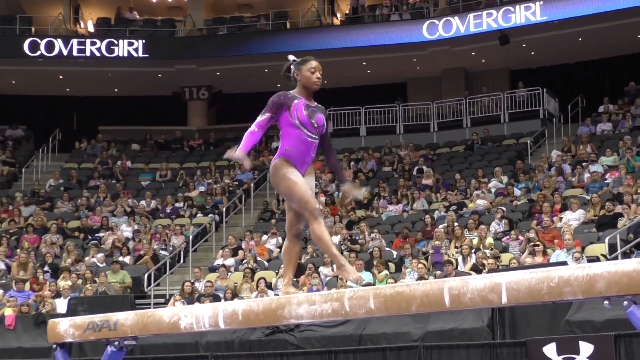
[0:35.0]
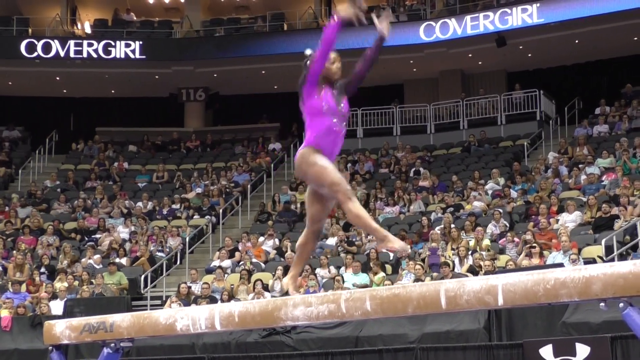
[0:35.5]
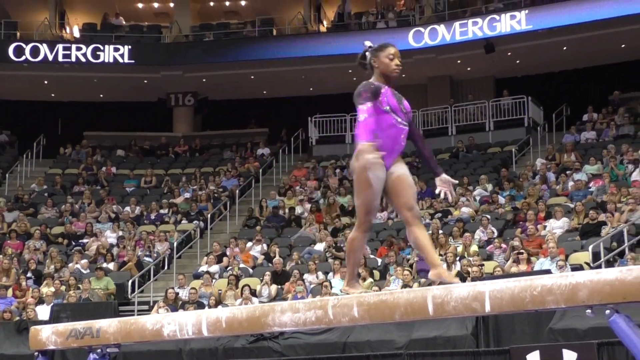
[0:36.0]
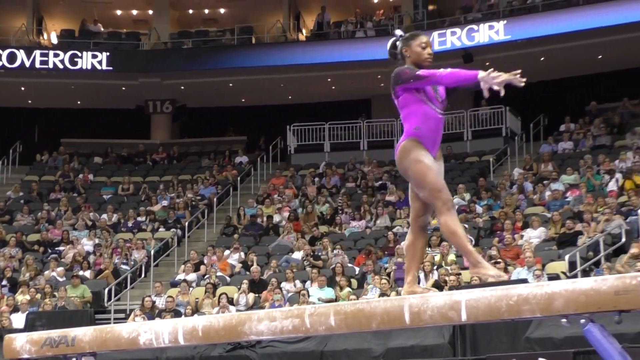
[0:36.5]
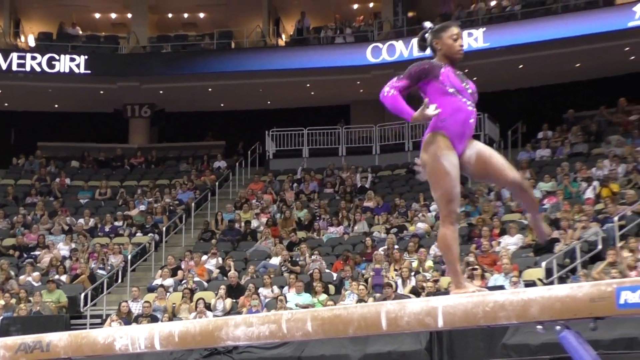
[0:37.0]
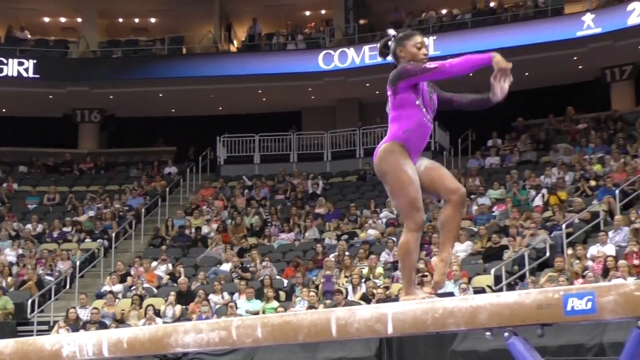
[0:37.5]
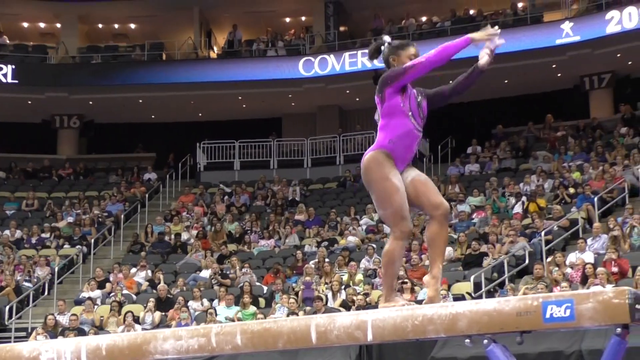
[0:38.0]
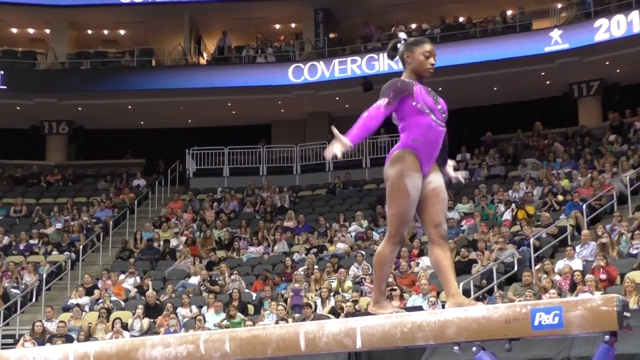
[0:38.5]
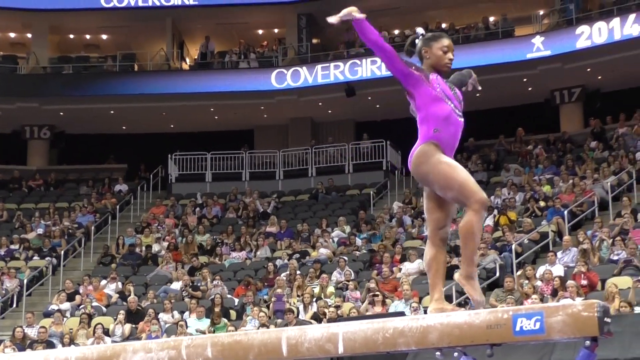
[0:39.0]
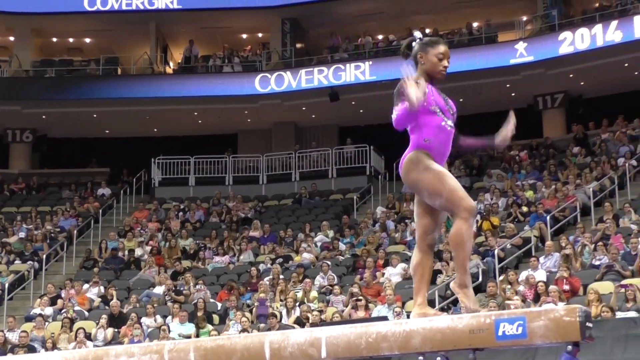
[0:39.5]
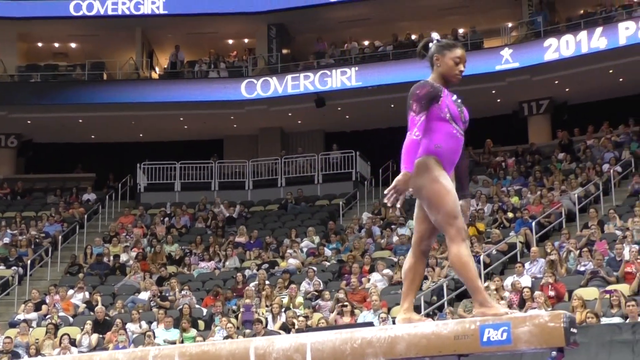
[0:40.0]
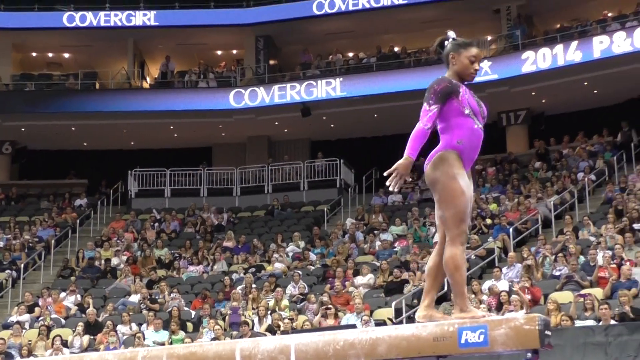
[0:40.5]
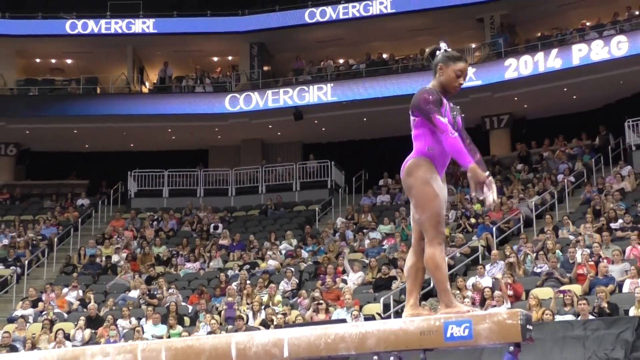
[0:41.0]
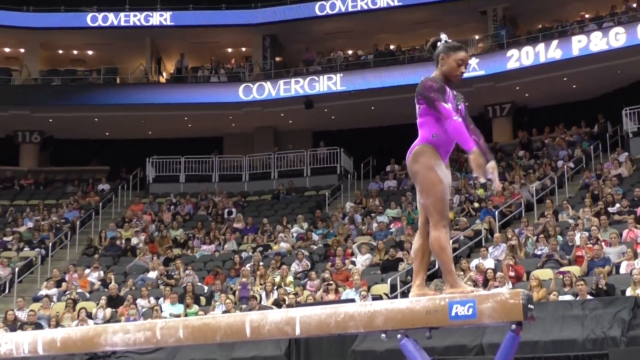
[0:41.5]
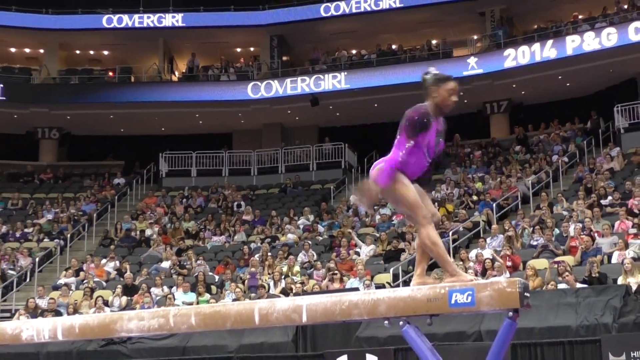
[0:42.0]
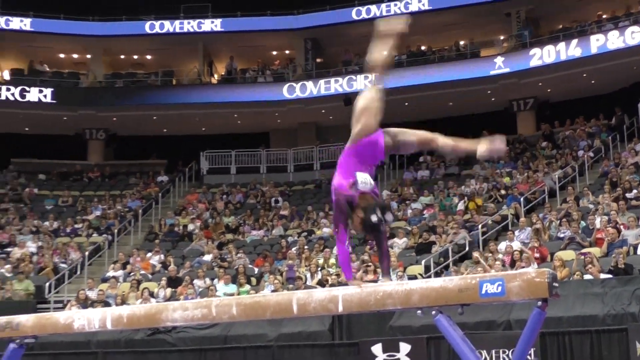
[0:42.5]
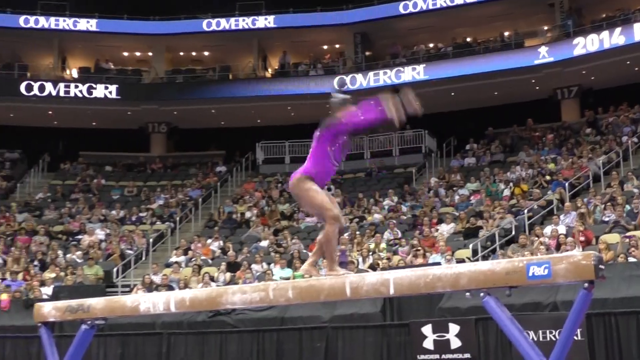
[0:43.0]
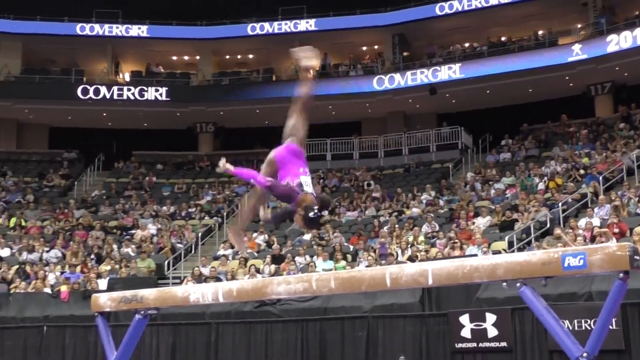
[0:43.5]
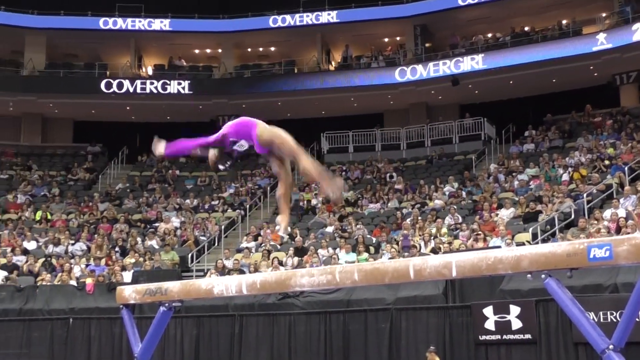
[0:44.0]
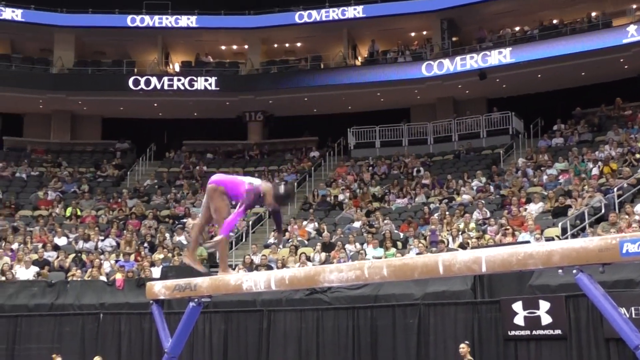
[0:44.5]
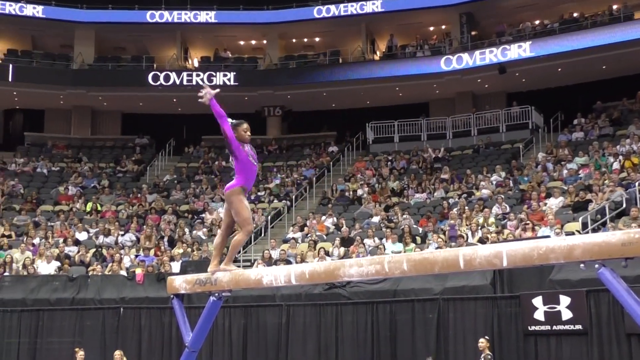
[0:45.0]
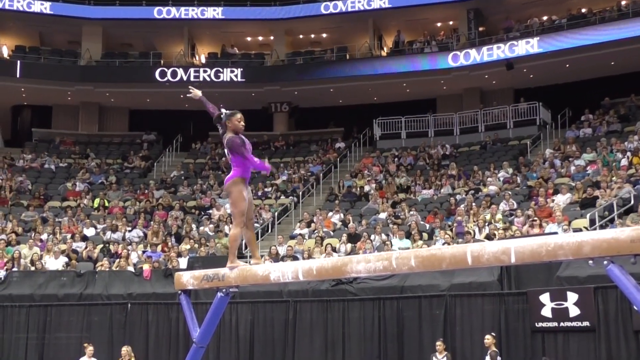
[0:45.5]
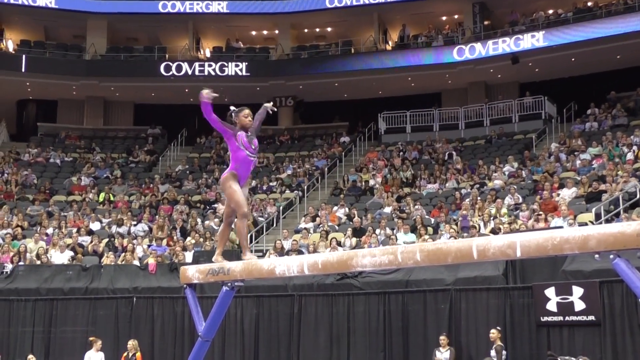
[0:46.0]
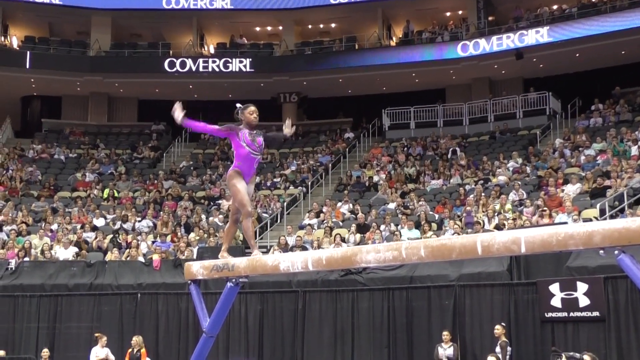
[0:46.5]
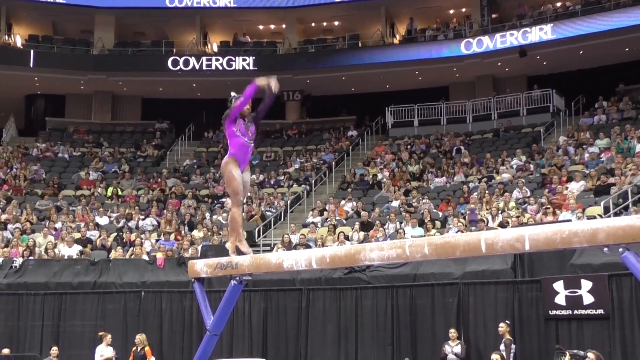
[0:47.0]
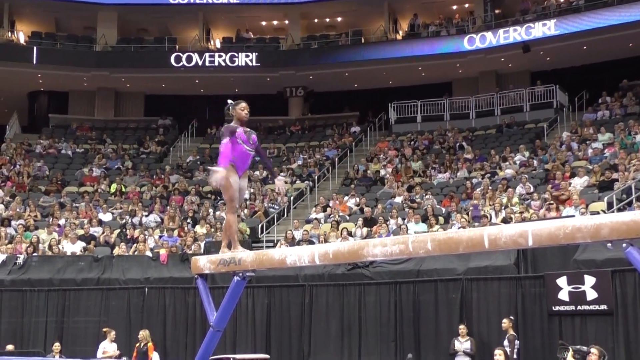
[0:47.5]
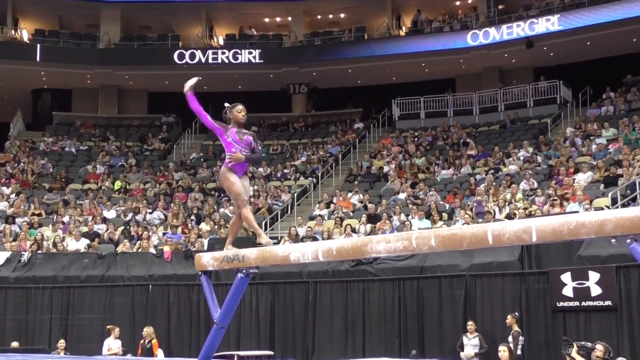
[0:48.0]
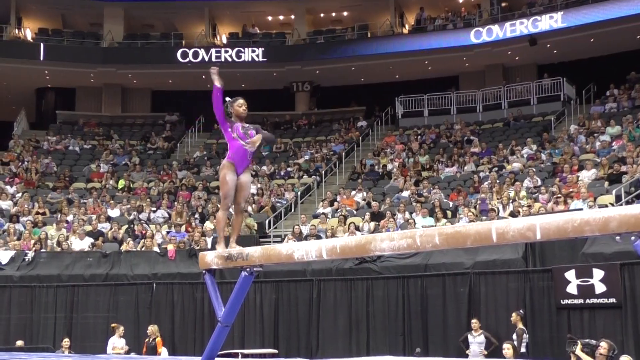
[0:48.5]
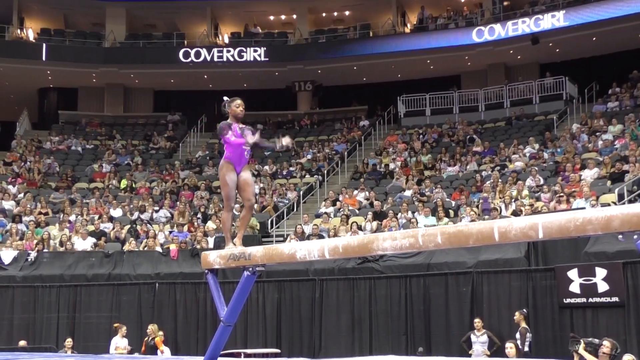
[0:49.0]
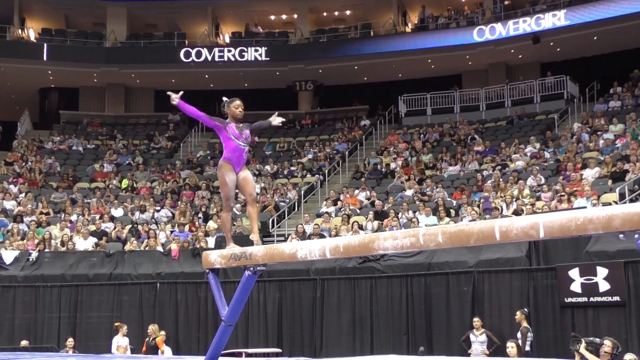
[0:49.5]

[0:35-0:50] She takes a few small, graceful steps toward the end of the balance beam. There is another P&G partnership on the side of the beam. She then does three backflips in a row across the entire length of the beam. There is a little wobble at the end, but she doesn't fall off; she catches herself, stretches up again with both arms in the air and does a few more graceful poses. This part of the performance is shown much more close up on what she is doing on the beam; for most of it, the people below, the other gymnasts, are not visible, only Simone as she performs. During the simpler parts of the routine, where there is just a step, there is a lot of graceful arm movement.